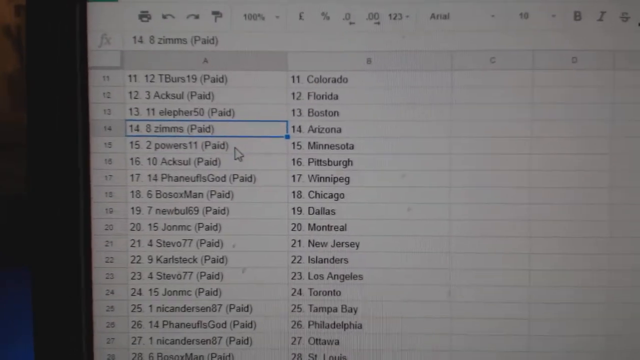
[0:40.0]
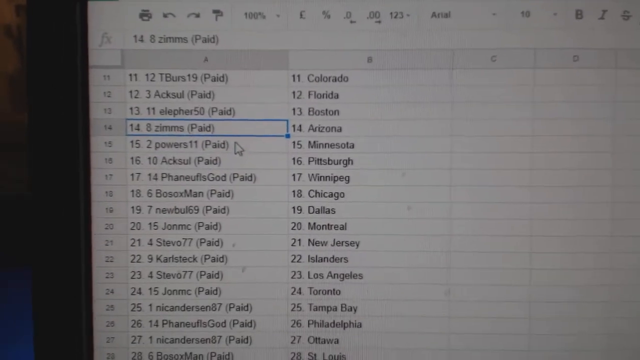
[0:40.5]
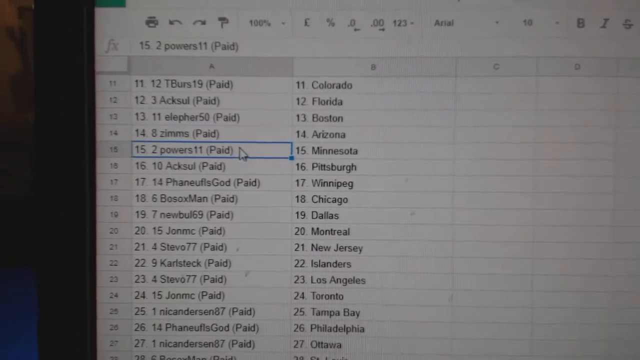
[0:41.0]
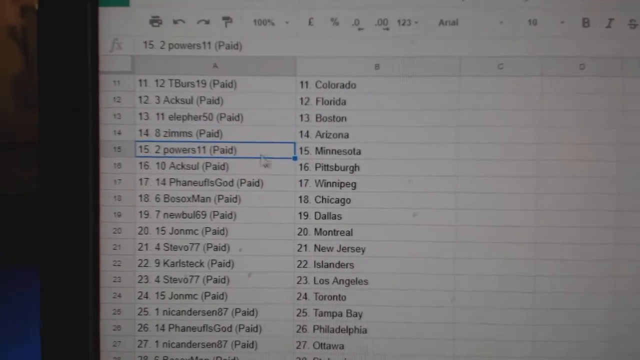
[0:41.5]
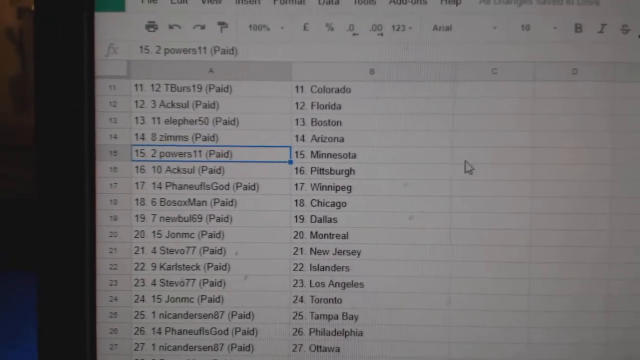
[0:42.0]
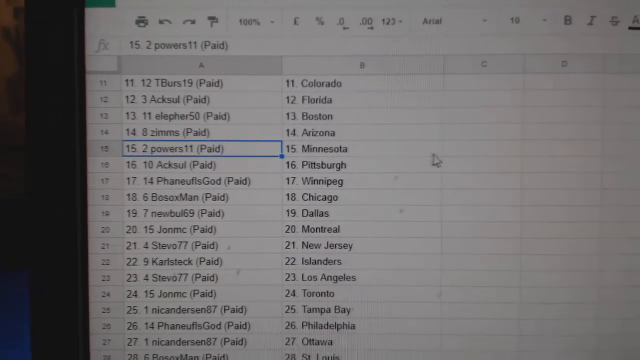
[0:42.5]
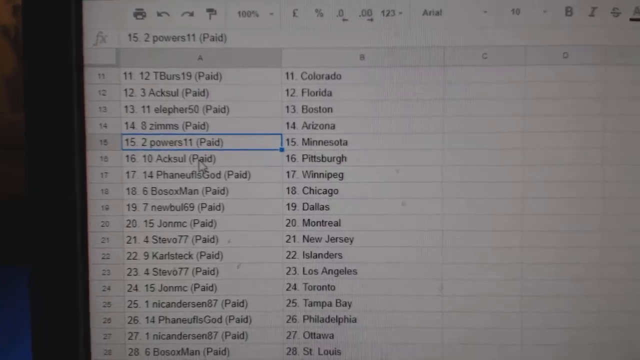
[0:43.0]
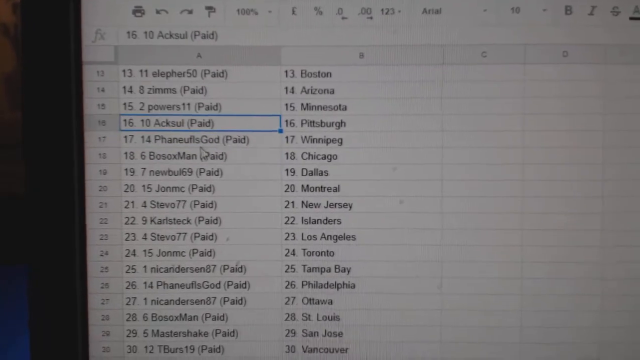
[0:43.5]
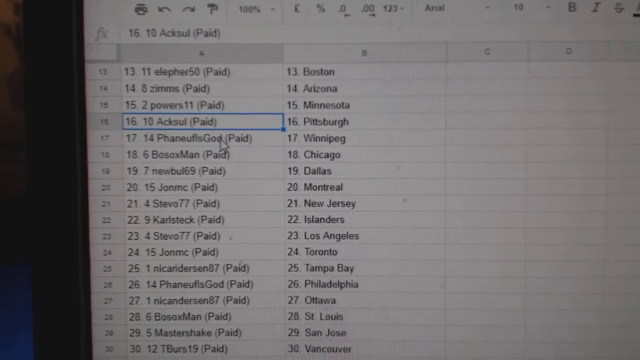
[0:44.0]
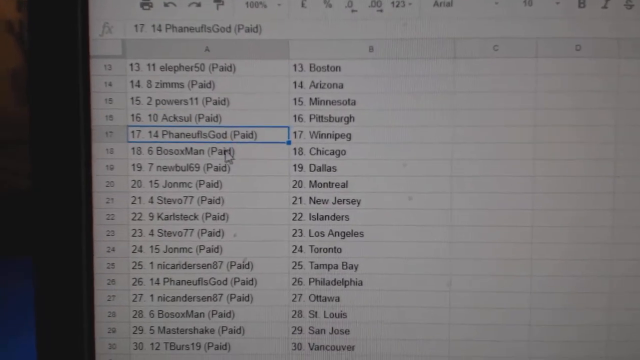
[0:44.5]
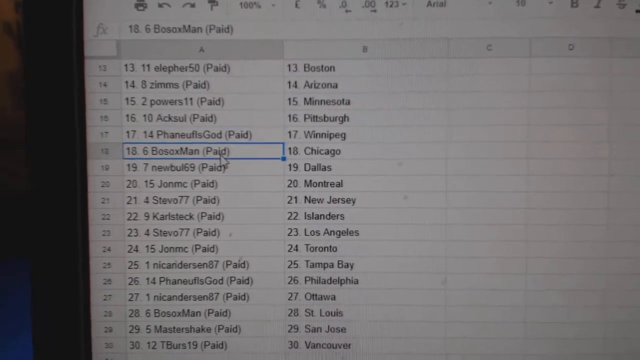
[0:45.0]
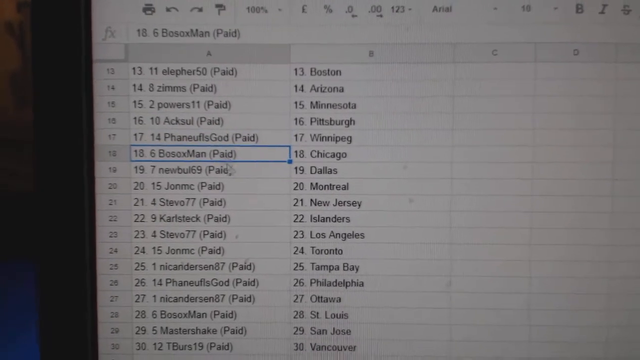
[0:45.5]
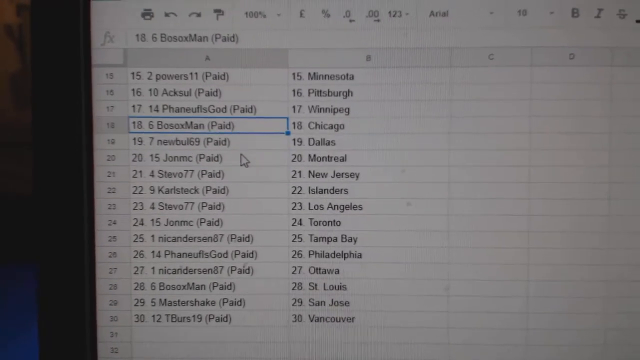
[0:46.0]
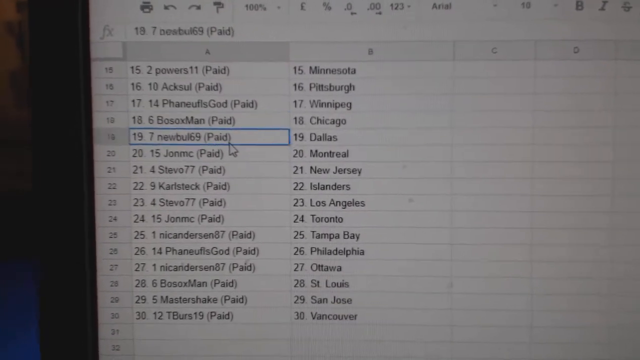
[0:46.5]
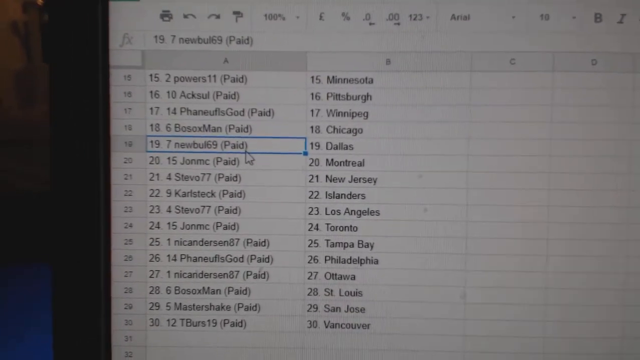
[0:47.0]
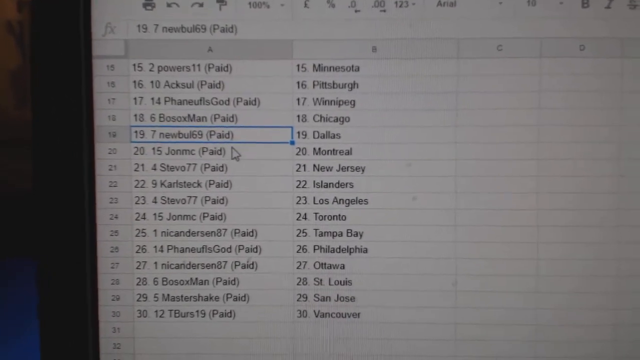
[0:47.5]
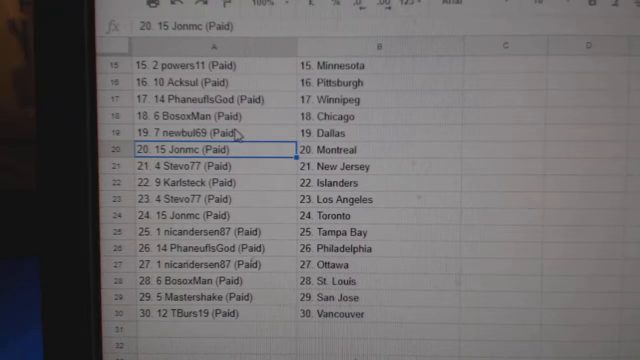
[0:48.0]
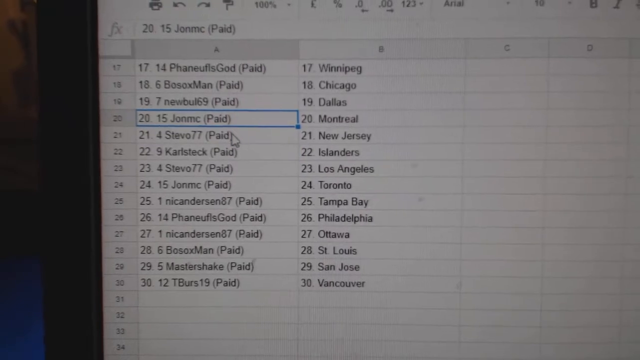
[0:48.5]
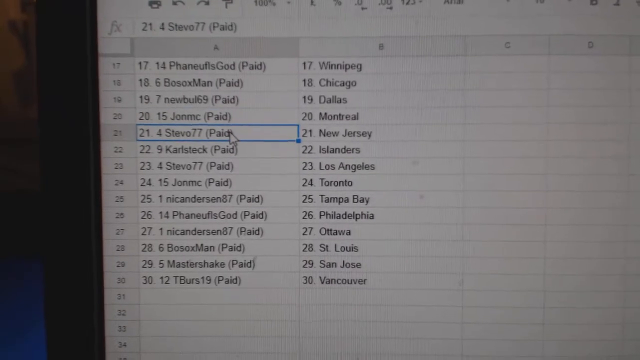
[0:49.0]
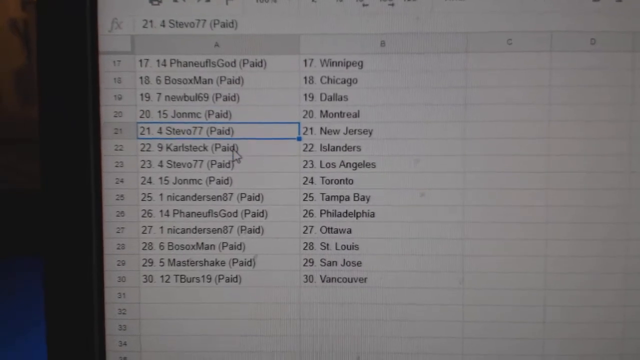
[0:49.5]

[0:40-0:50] The person using the computer scrolls down a list of names, presumably customers, with "paid" in brackets beside each name and a state, presumably where the customer is based. All the states are in America, including Colorado, Florida and Boston, covering a wide range across the country. The mouse arrow scrolls down the customers and clicks on individual customers.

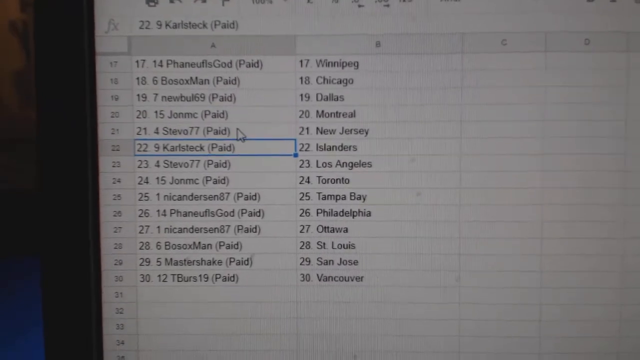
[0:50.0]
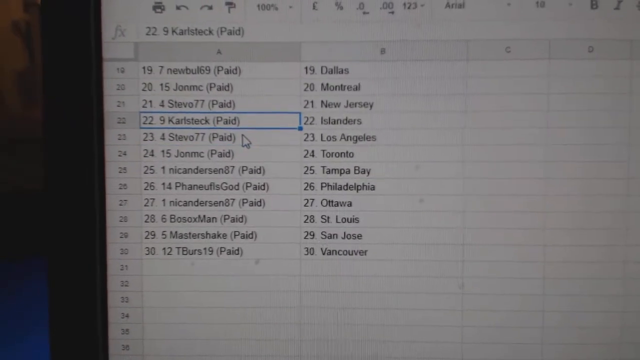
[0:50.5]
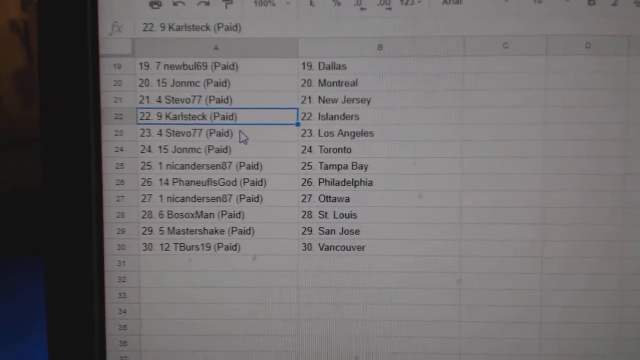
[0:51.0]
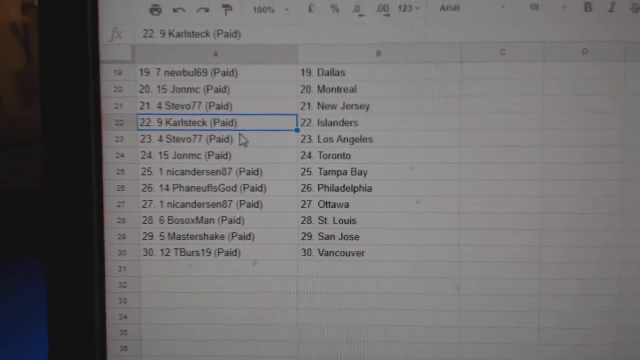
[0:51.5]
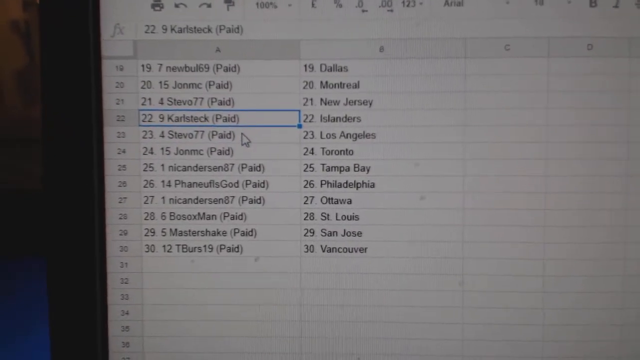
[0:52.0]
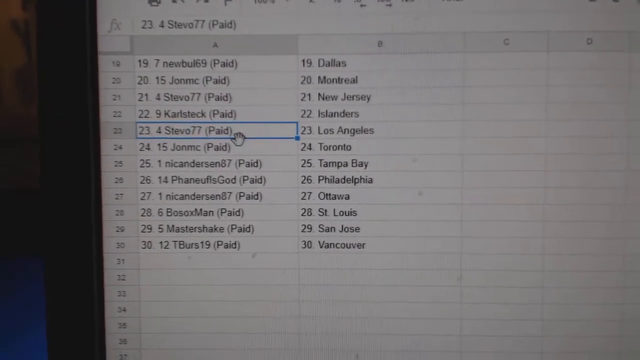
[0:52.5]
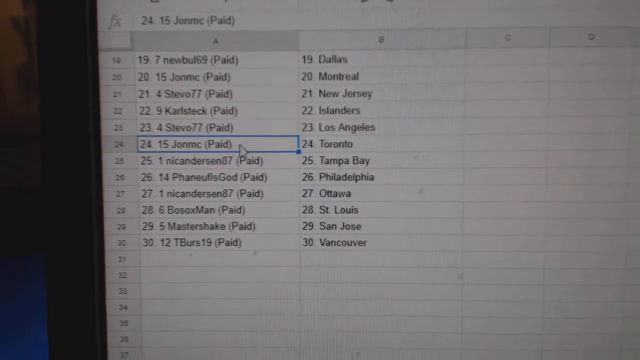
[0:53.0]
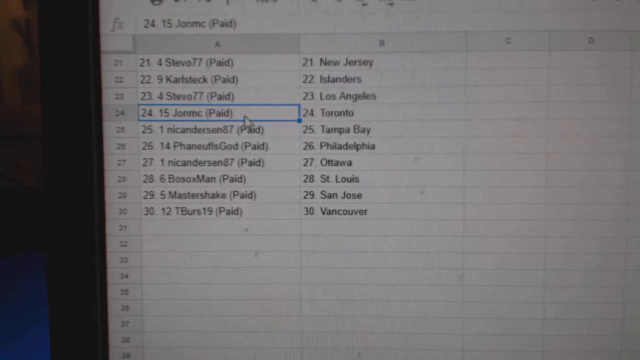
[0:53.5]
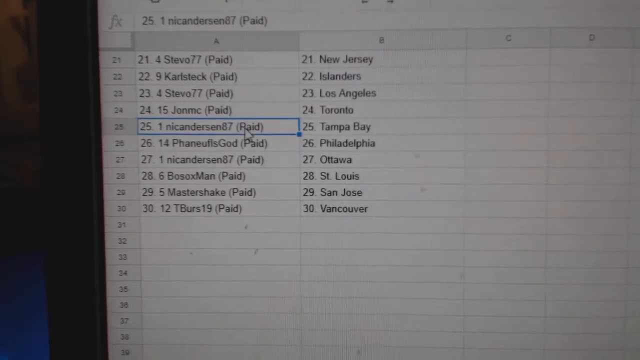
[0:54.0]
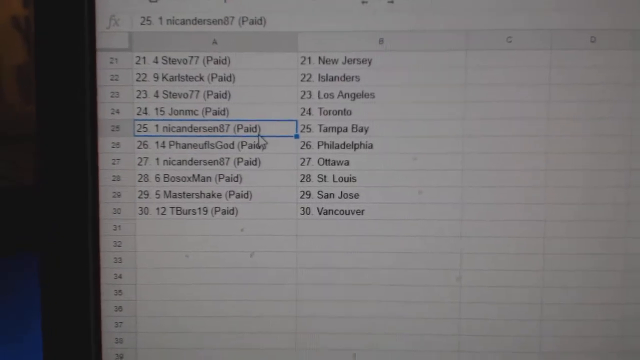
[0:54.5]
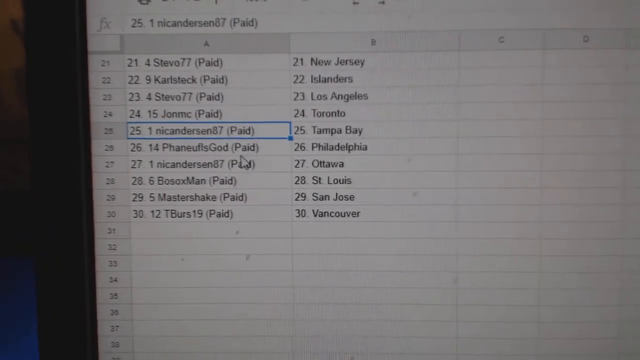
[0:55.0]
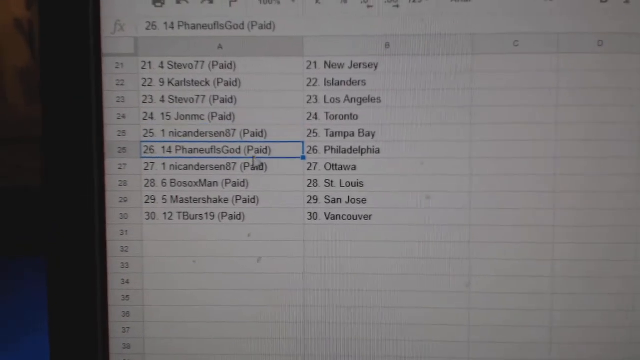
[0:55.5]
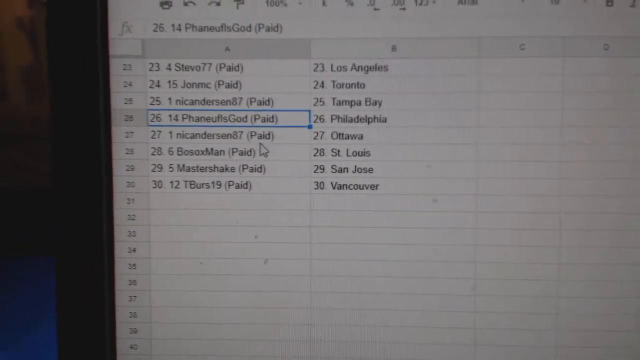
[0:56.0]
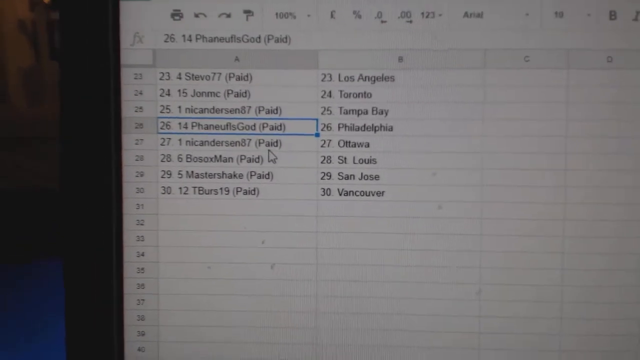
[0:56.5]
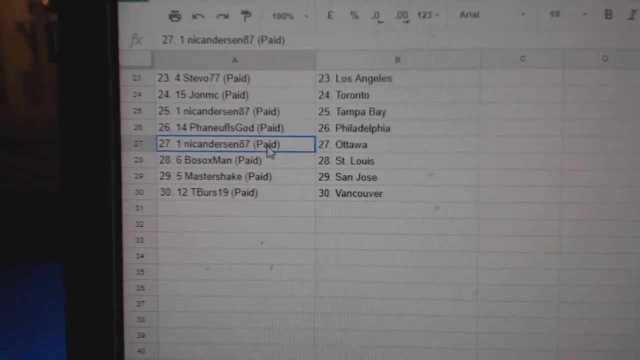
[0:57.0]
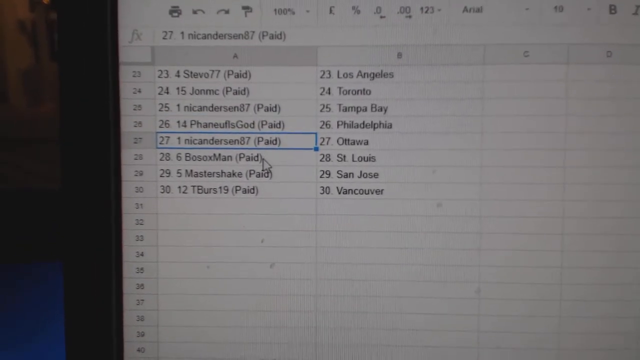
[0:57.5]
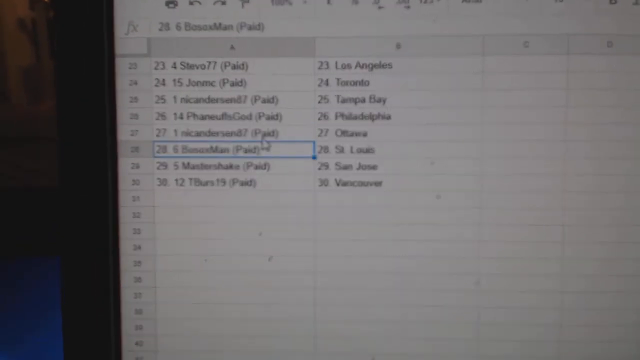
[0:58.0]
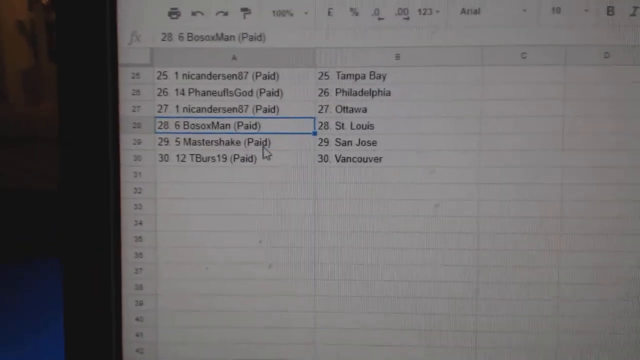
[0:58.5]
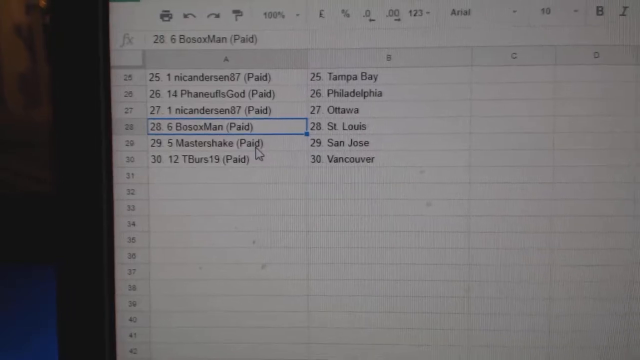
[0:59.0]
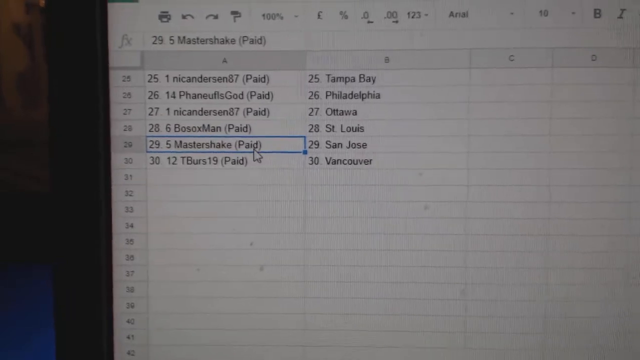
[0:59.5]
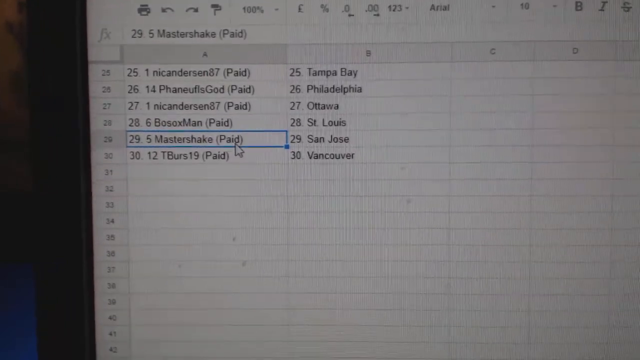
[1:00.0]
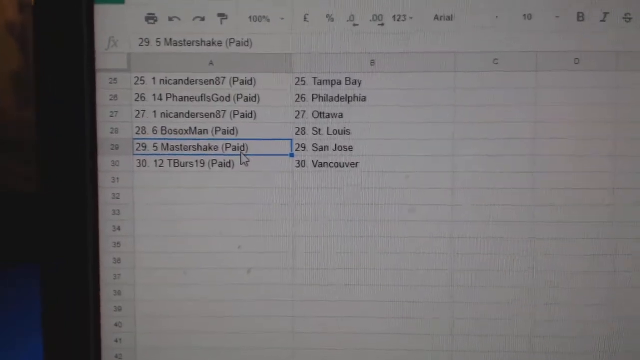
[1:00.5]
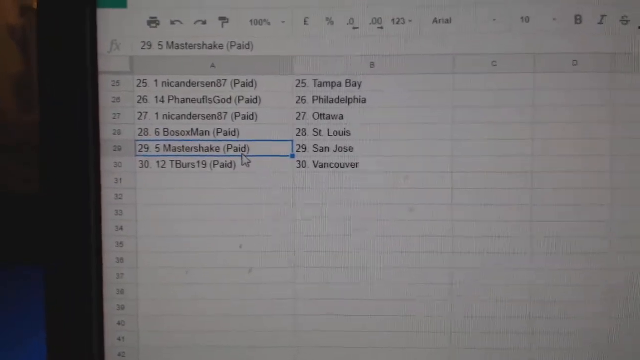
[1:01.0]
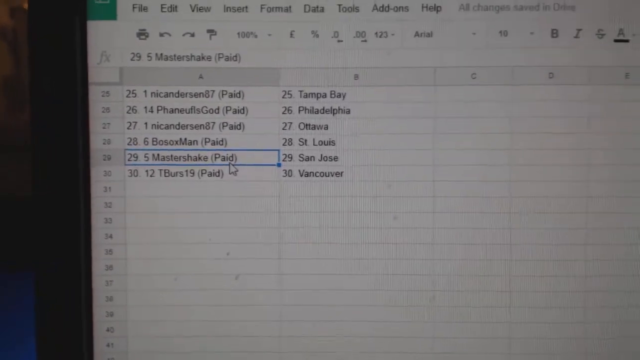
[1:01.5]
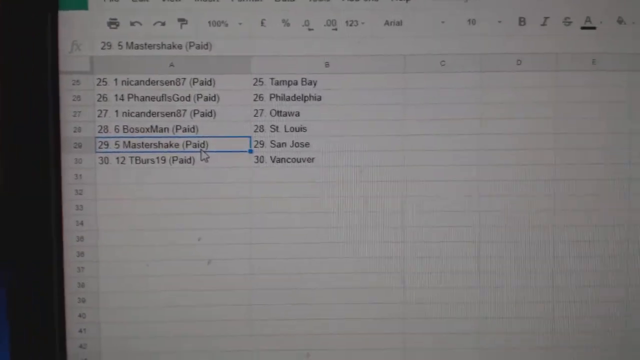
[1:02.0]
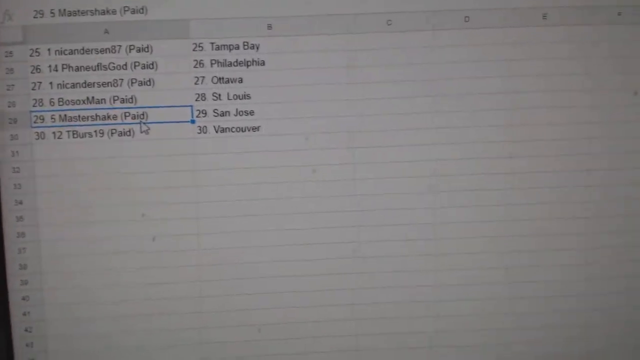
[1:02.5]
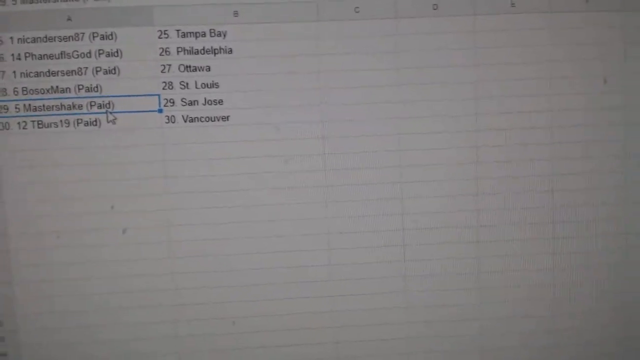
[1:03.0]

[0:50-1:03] The poster's name is shown. The computer screen displays the names with states beside them, and the arrow scrolls down over individual names; when the arrow is on a name, it is highlighted in a blue square. Each of these customers has "paid" in brackets. The footage is clumsy, shaky and very basic, clearly not professional, filmed as someone cross-checks customers' names to see whether they have paid.